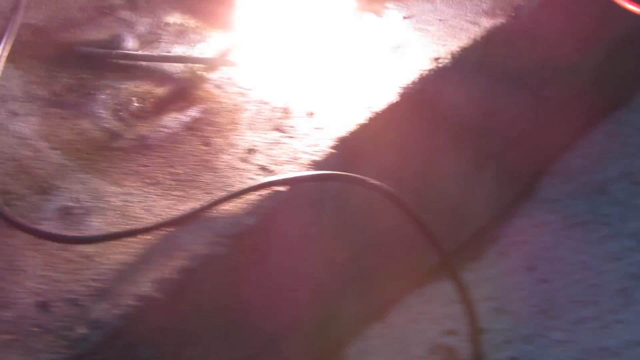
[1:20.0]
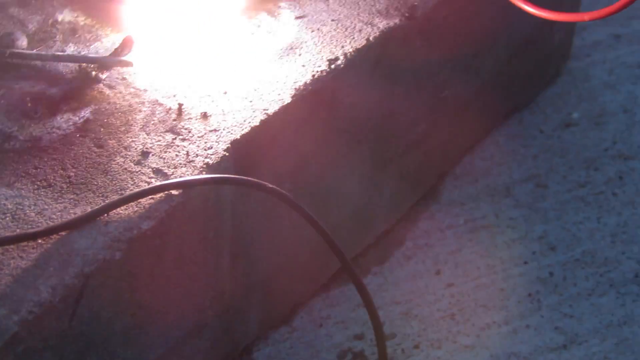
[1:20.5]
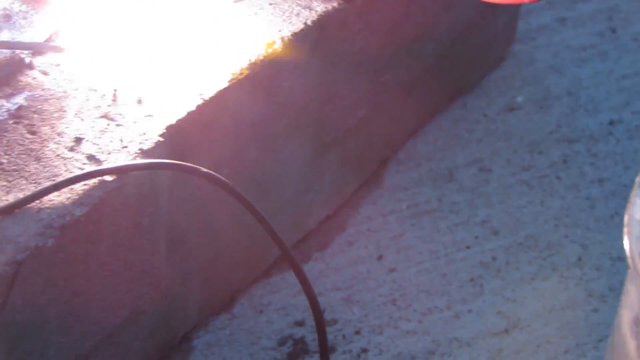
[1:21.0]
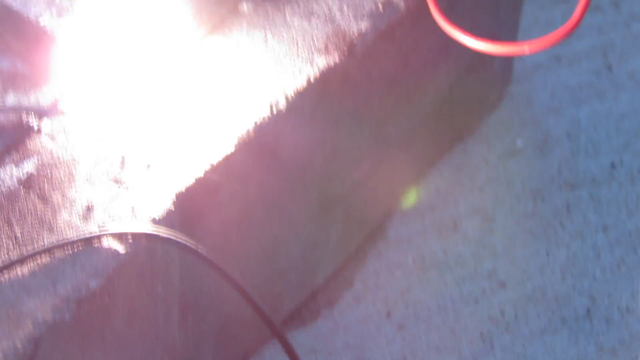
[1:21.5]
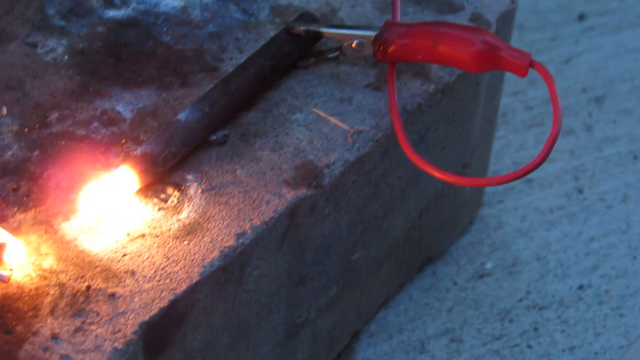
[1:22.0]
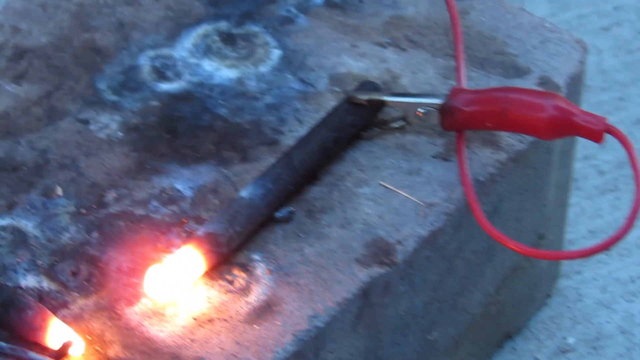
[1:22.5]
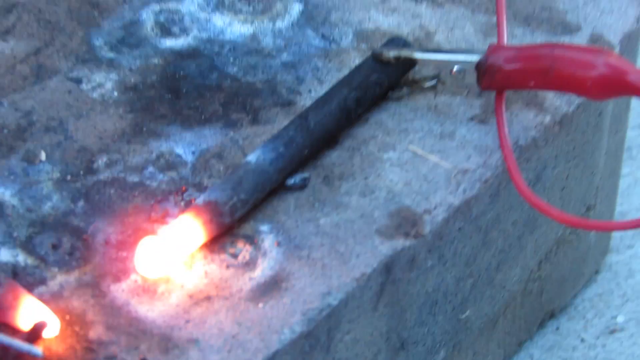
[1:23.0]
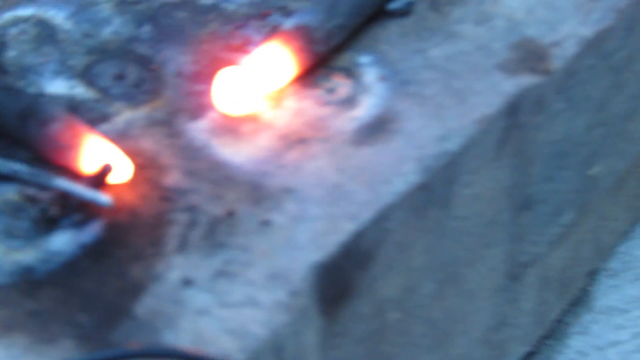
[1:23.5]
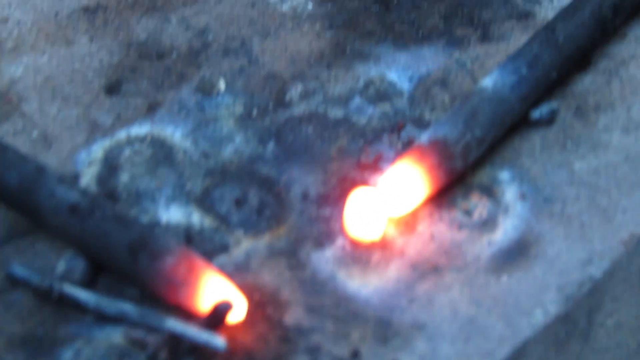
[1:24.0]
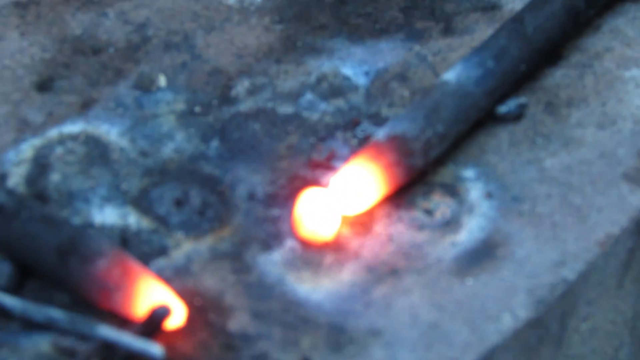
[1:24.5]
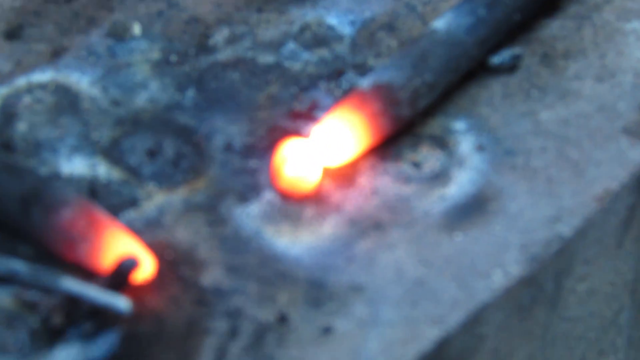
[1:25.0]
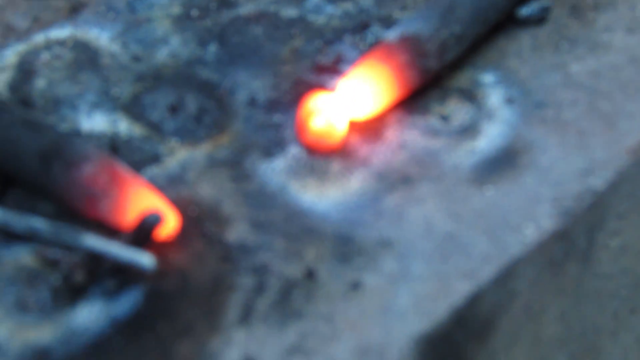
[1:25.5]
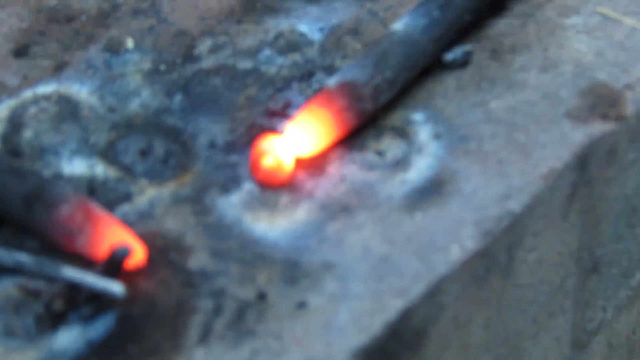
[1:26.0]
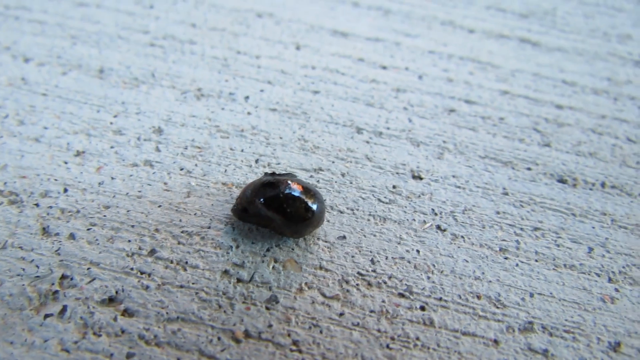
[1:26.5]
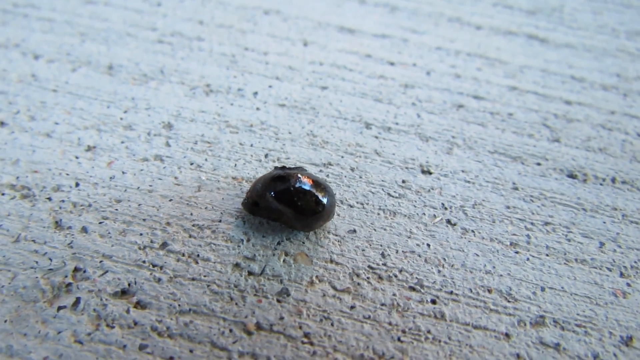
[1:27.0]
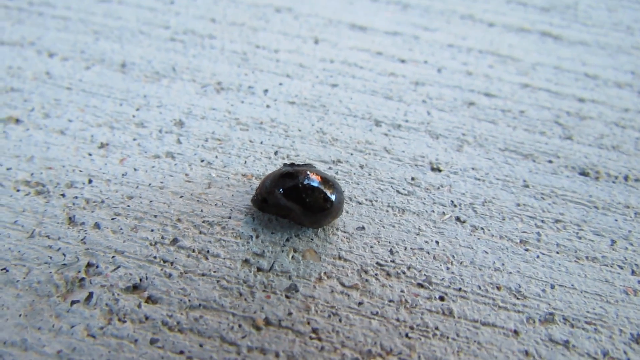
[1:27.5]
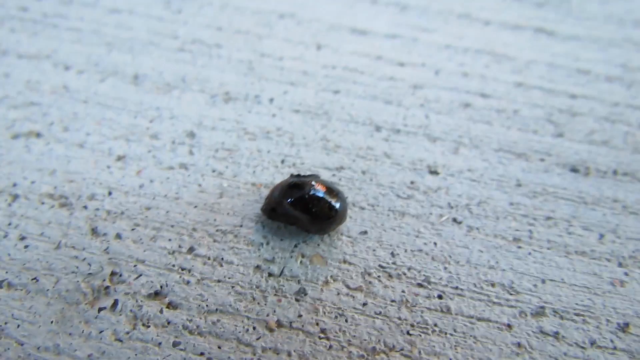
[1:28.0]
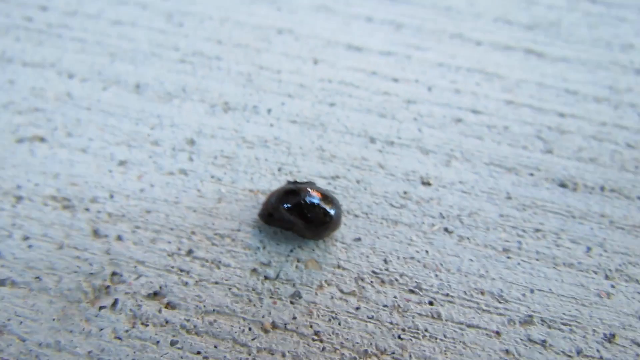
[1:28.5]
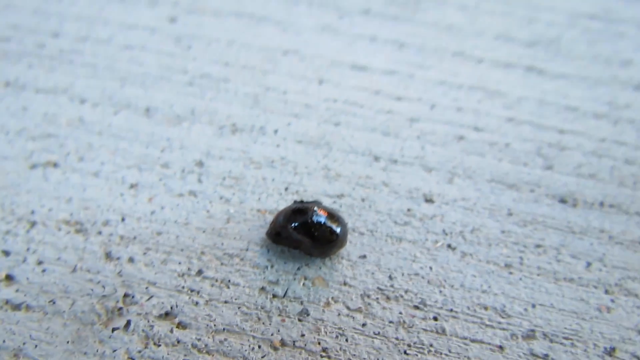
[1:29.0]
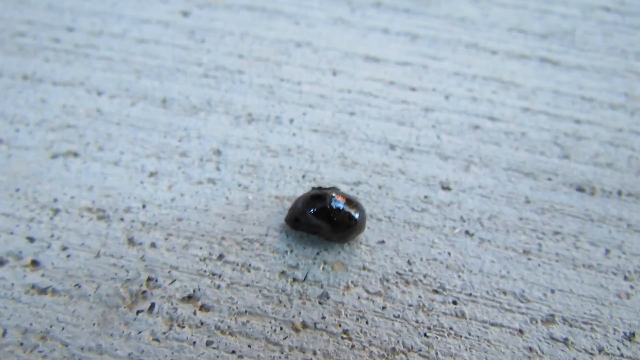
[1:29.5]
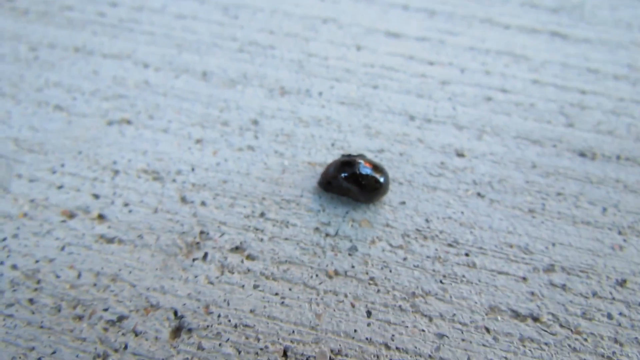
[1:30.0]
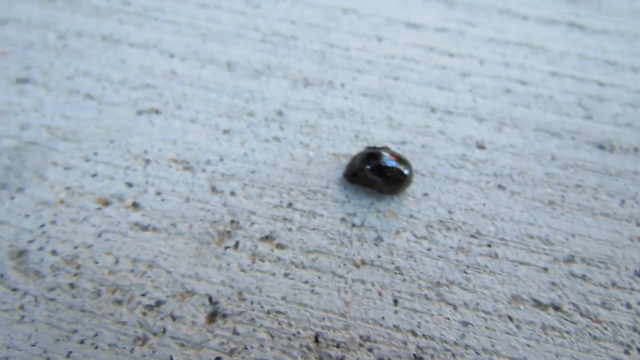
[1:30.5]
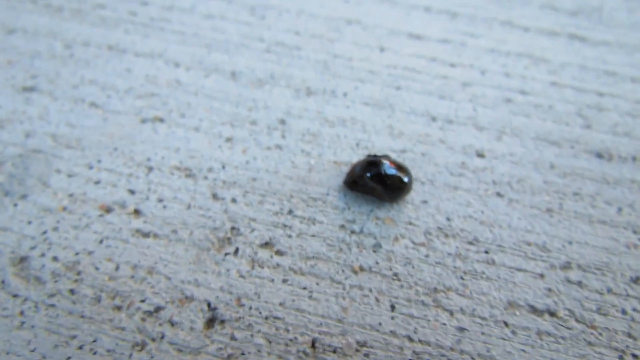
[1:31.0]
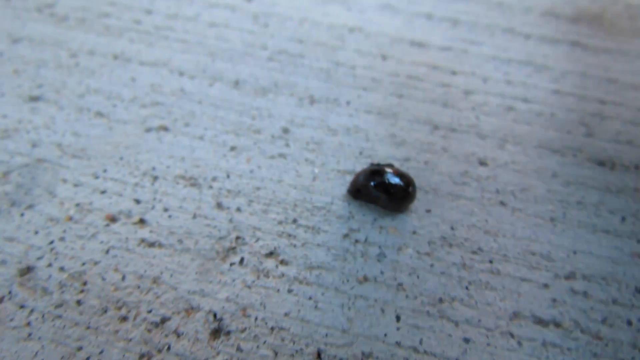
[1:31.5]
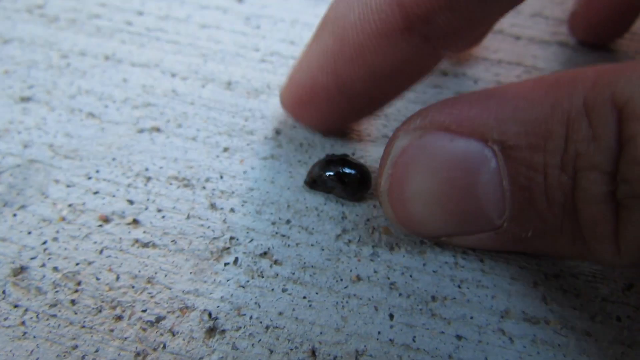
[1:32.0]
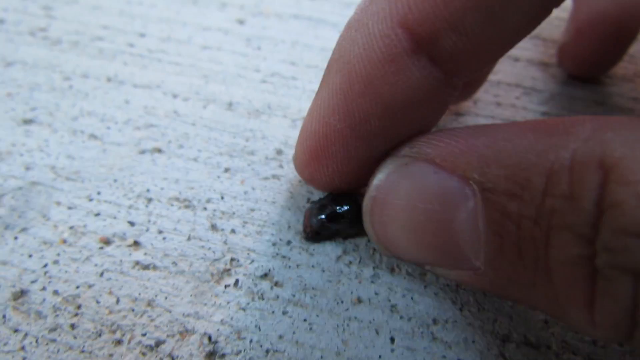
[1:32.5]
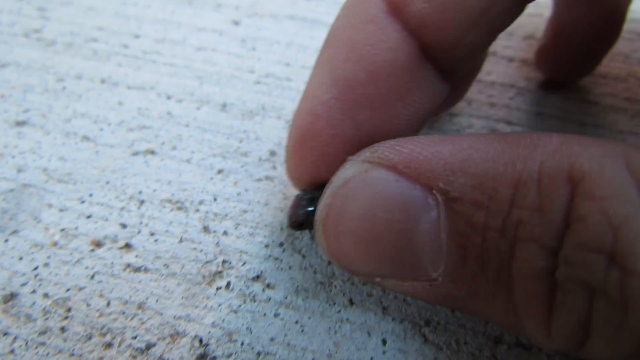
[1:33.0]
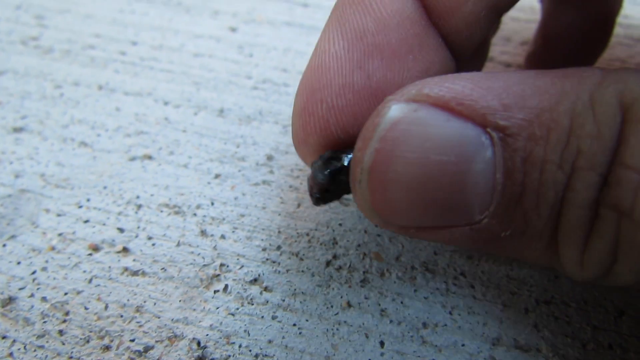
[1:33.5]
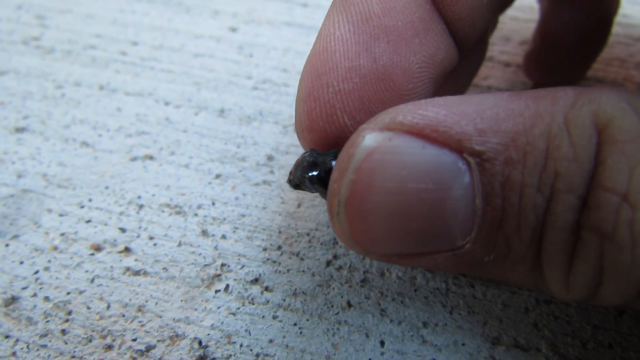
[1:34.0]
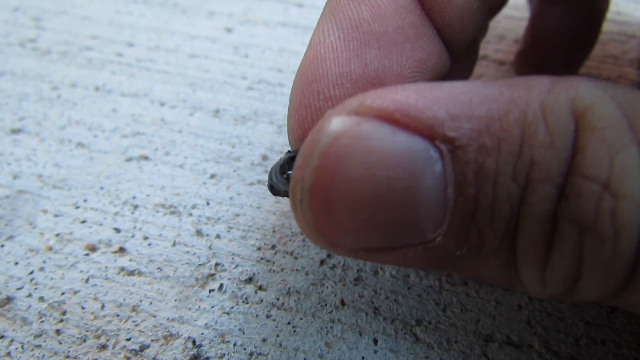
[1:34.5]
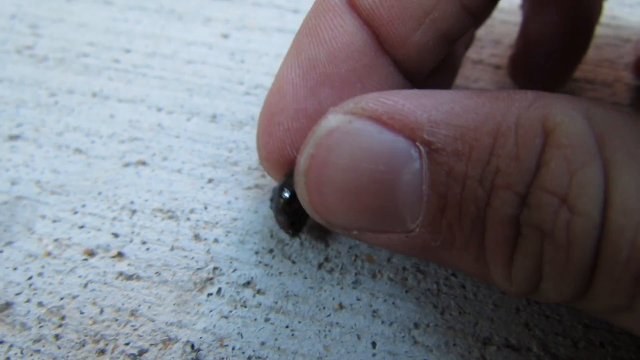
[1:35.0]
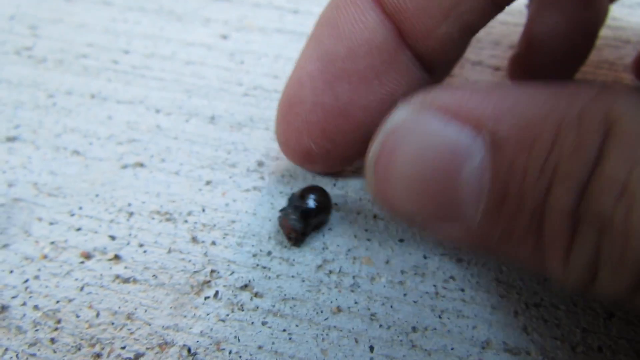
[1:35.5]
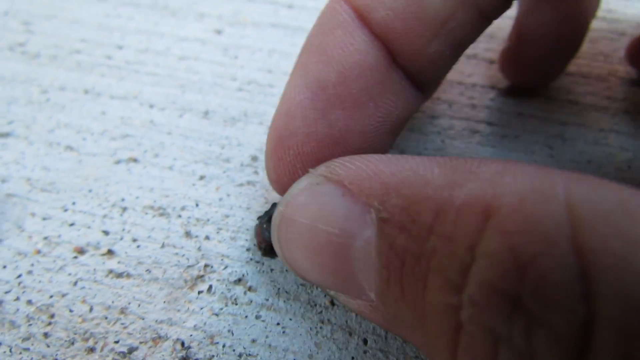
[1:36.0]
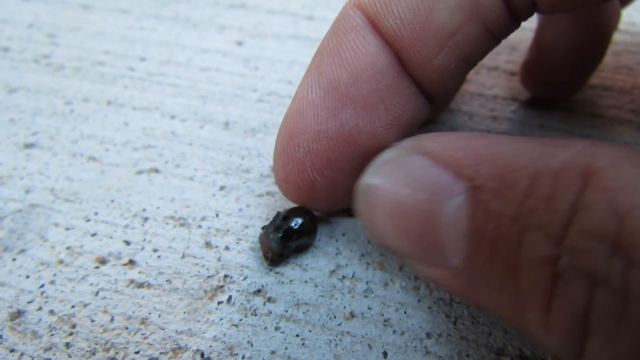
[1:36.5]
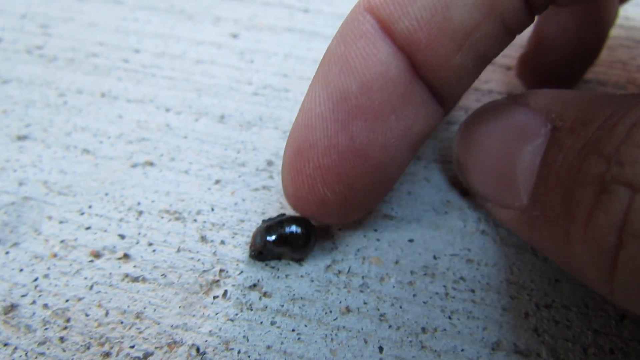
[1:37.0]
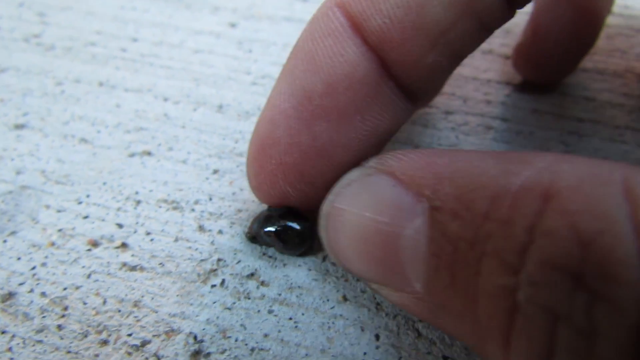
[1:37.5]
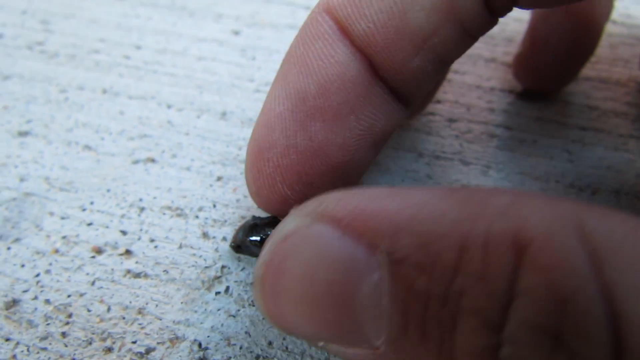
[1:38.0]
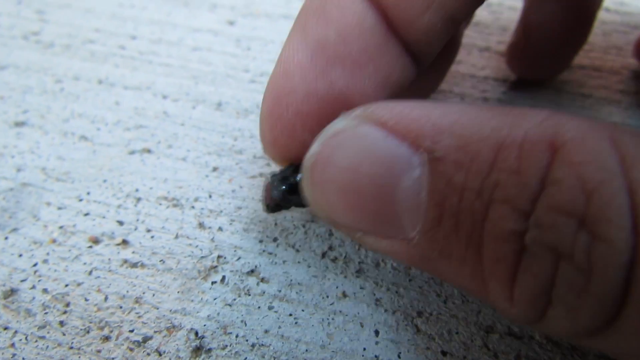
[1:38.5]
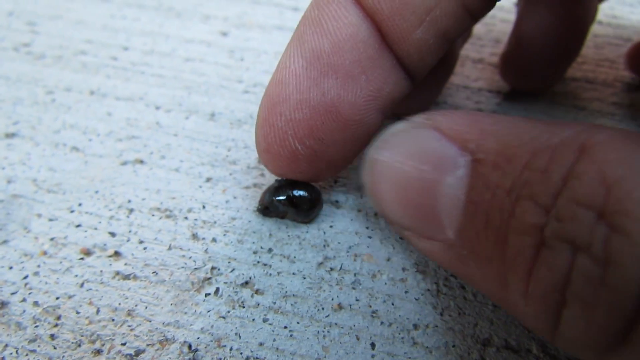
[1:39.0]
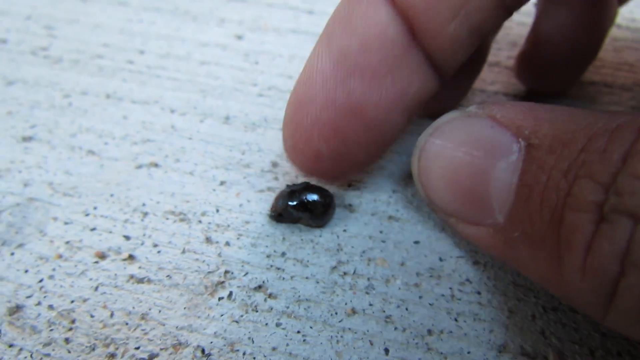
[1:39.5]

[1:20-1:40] A close-up view shows the same brick, which seems a bit lighter now. The camera moves right, away from the brick, and up to show the black cylinder on the right connected with the red tool, which is connected to a red cord. The camera moves a bit closer to the right black cylinder, then sort of a bit down while still very close up, then a bit to the left so both black cylinders are in view. Going even closer, it shows marks the fire from the two black cylinders had made on the brick. The video then changes to a different shot of a mostly white surface with black spots, like concrete or stone. In the middle is a small black object that looks like a beetle or a little black stone or rock of some sort. The camera moves out a bit, then more, and the thumb and index finger of a right hand come in from the right, touch the little black object and pick it up. The fingers seem to move the object between them for a few seconds, then put it back down on the surface. The index finger touches it again and moves it toward the front, touches it again and moves it toward the left, and touches it again.